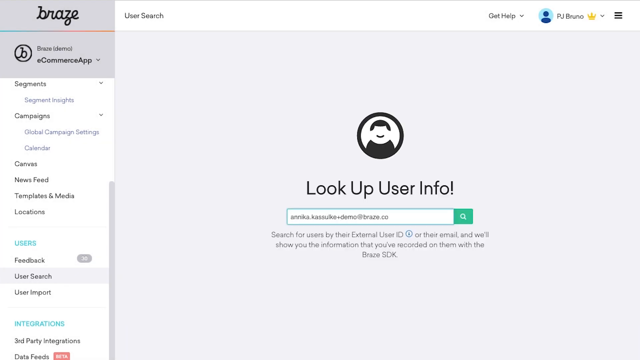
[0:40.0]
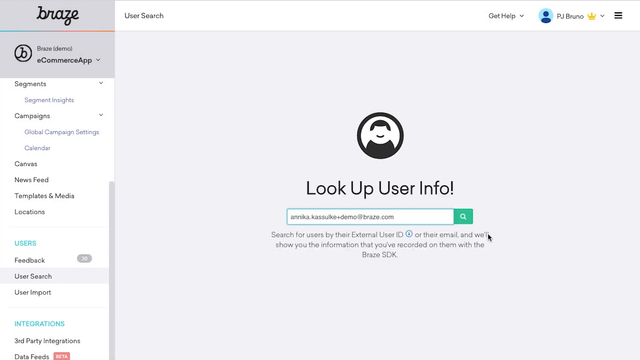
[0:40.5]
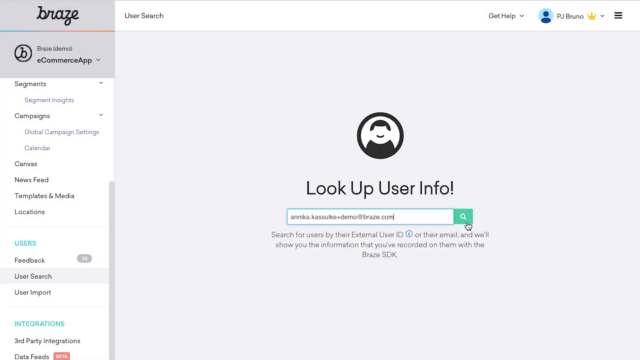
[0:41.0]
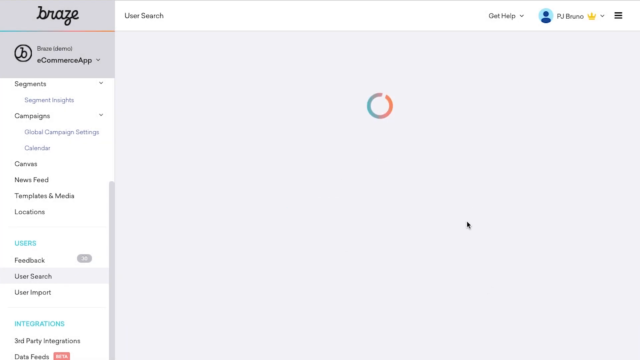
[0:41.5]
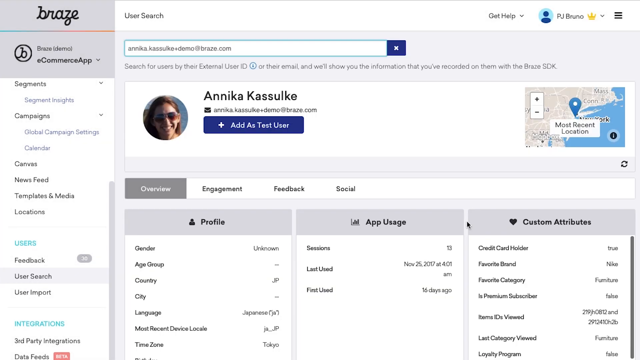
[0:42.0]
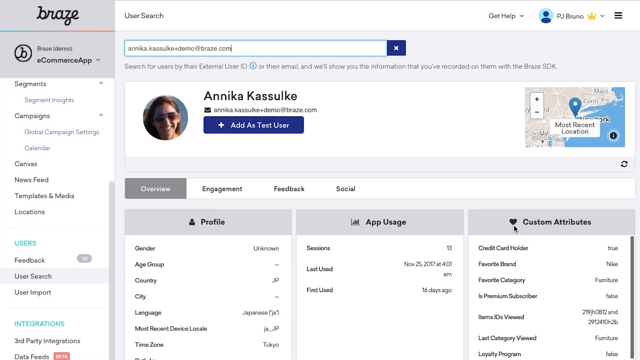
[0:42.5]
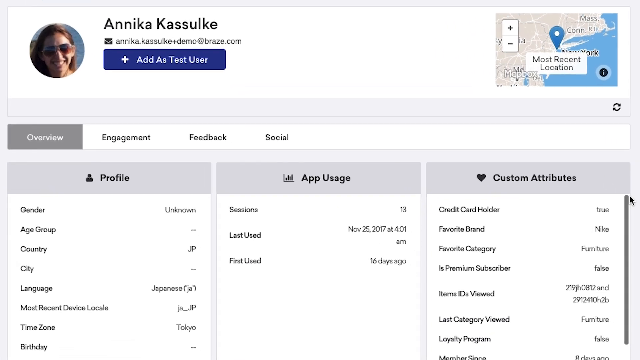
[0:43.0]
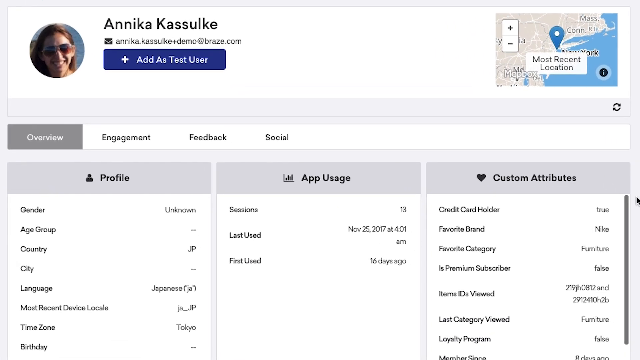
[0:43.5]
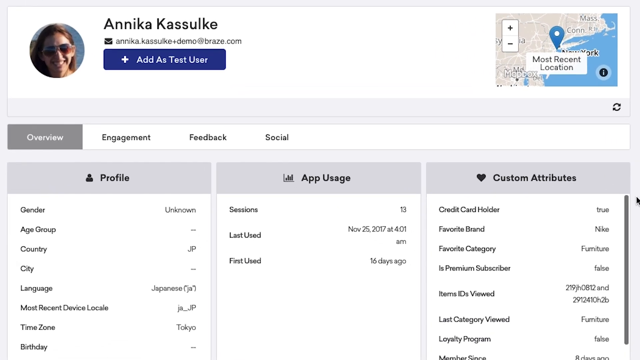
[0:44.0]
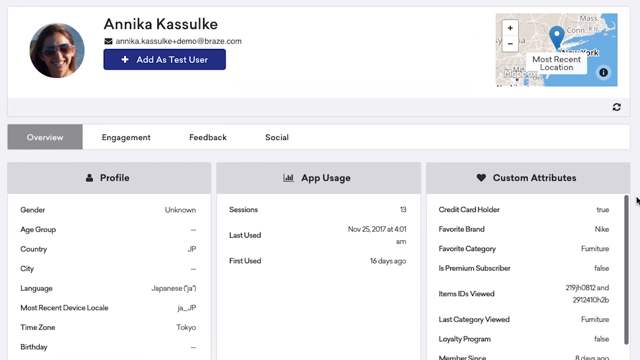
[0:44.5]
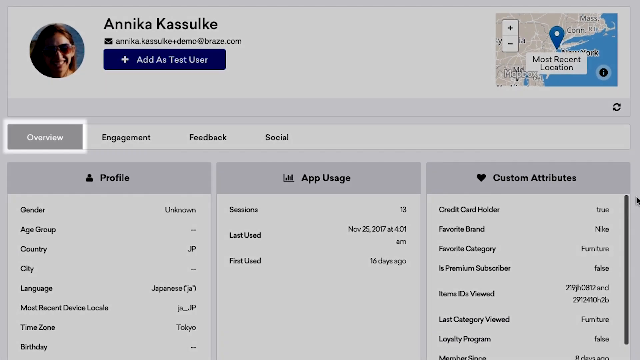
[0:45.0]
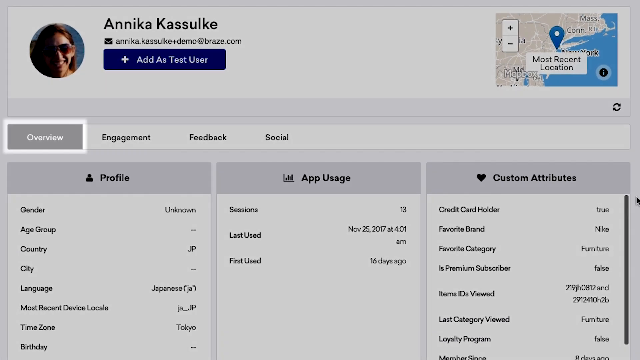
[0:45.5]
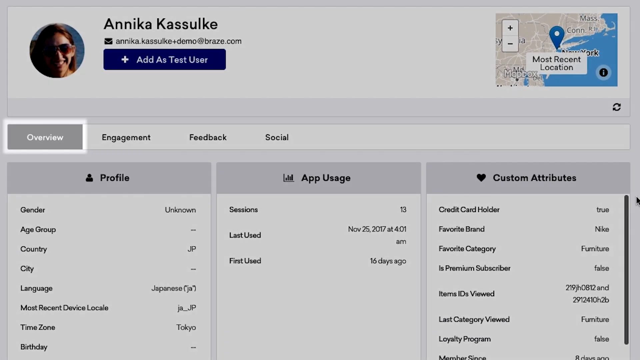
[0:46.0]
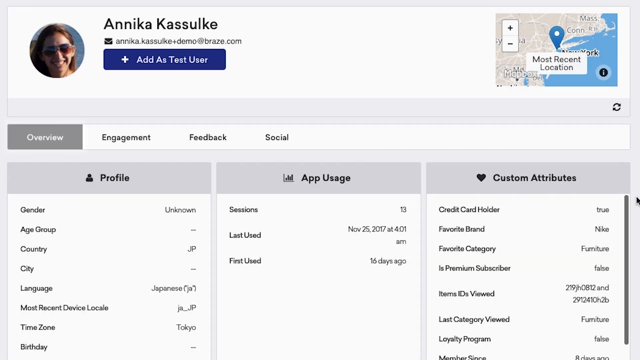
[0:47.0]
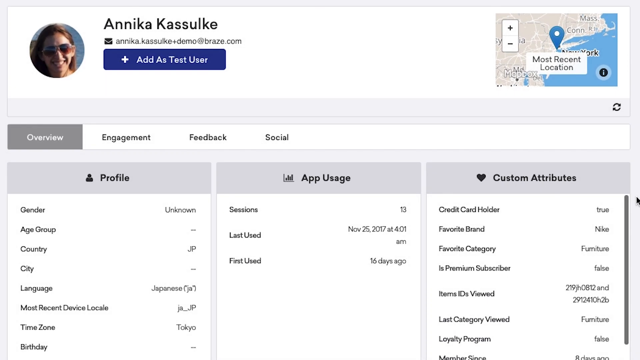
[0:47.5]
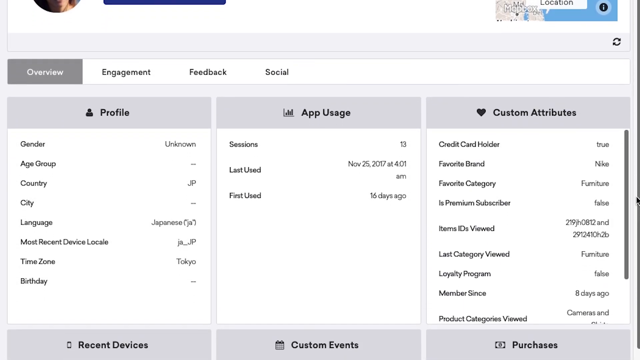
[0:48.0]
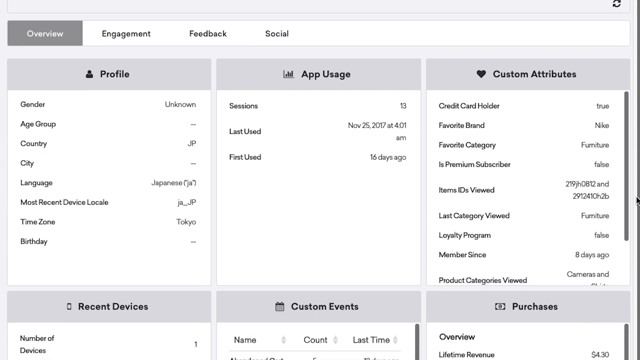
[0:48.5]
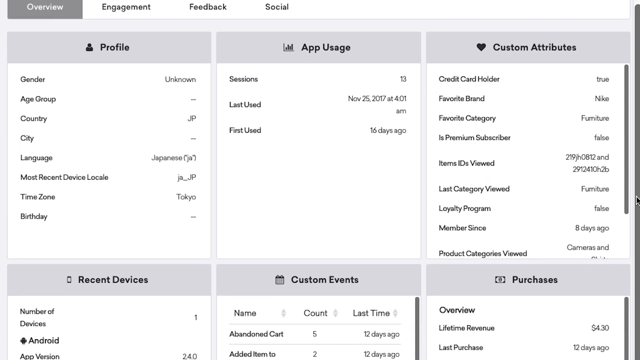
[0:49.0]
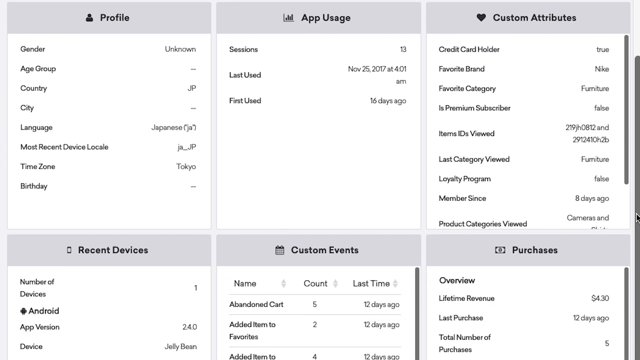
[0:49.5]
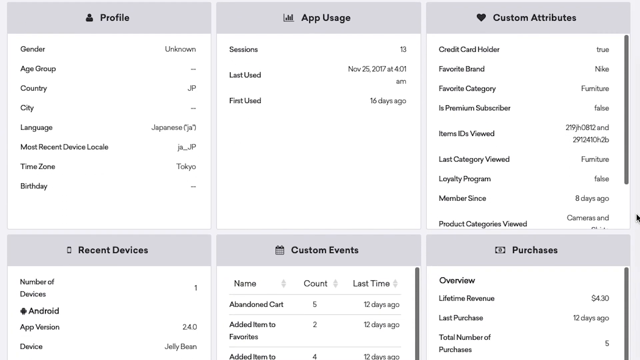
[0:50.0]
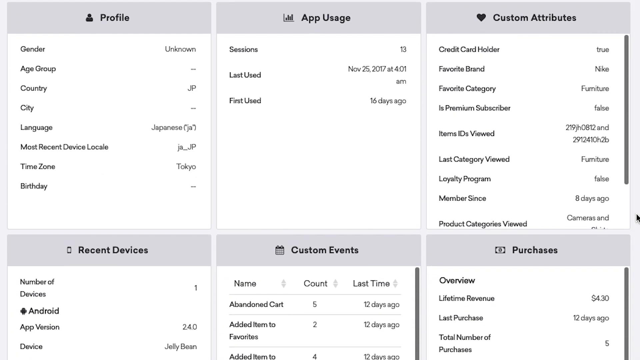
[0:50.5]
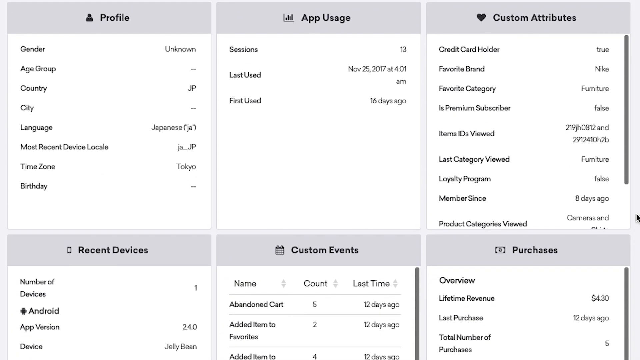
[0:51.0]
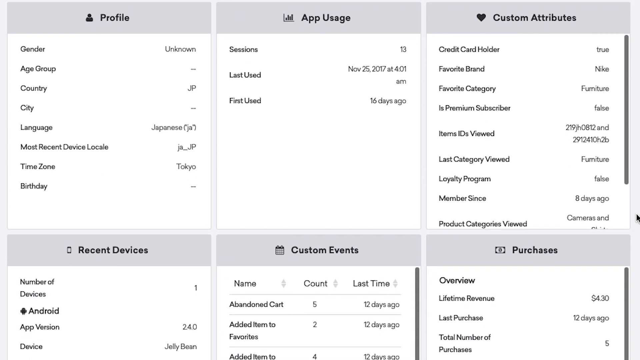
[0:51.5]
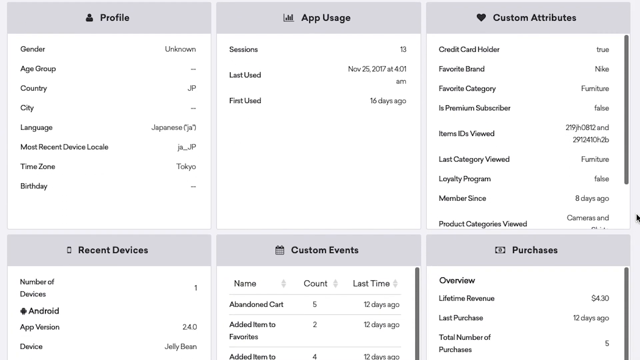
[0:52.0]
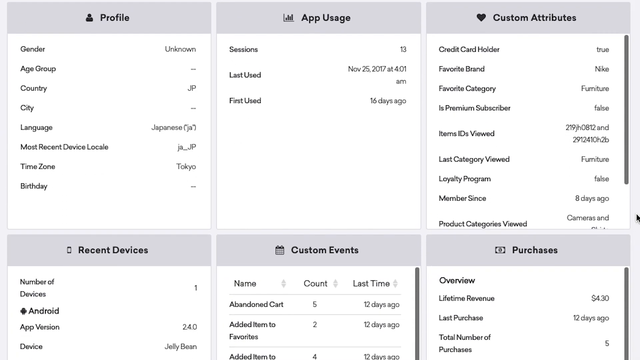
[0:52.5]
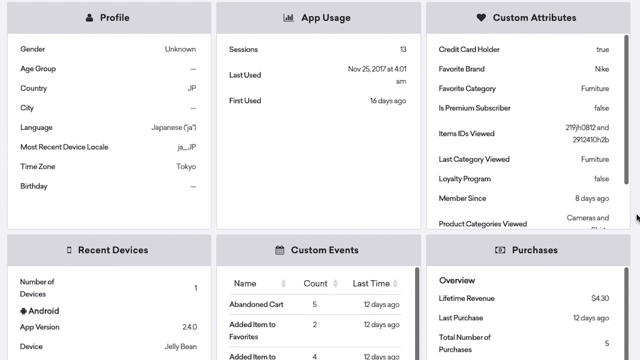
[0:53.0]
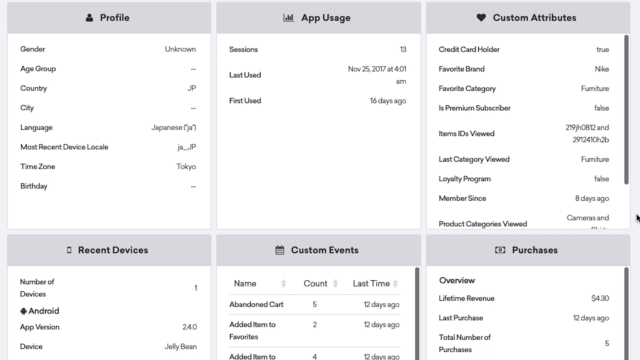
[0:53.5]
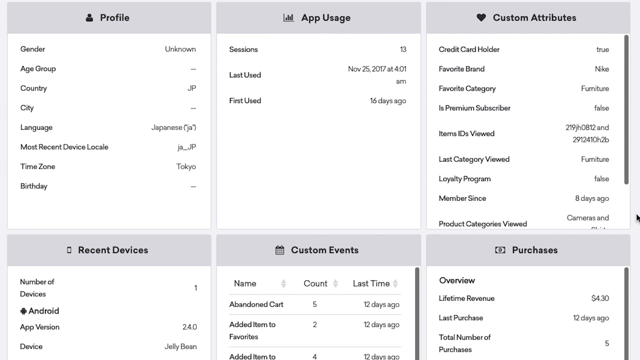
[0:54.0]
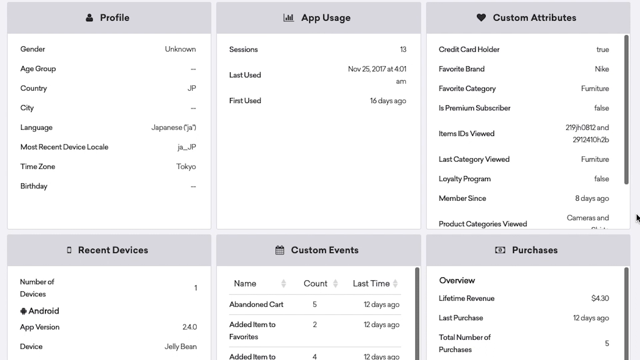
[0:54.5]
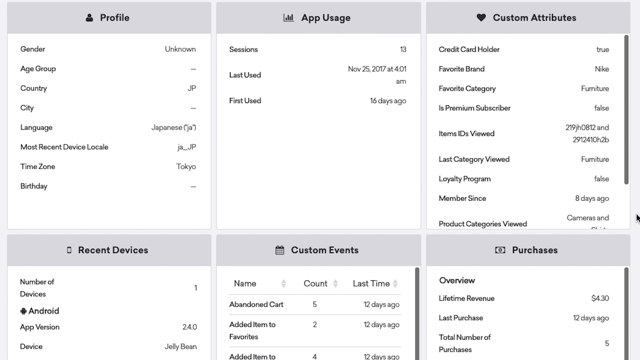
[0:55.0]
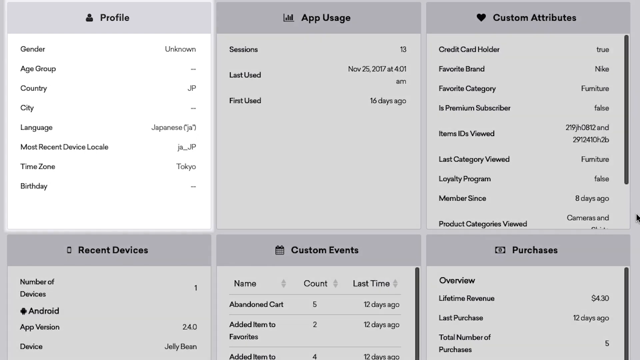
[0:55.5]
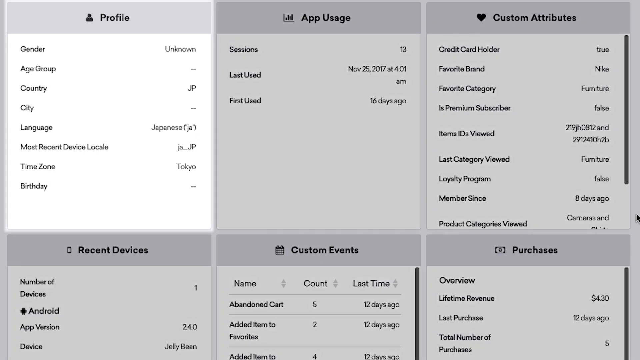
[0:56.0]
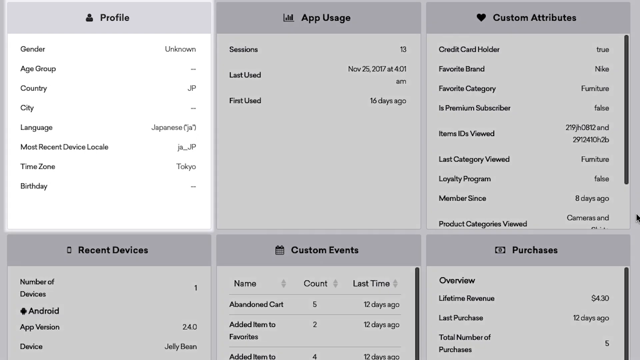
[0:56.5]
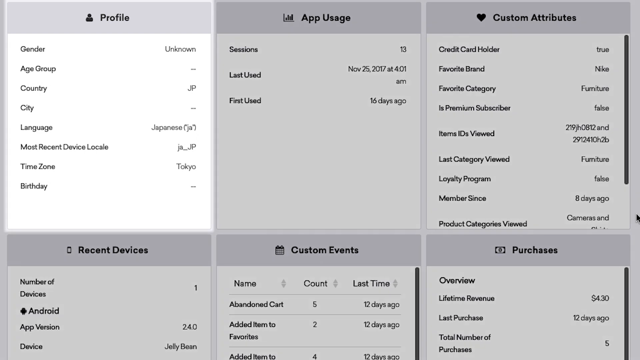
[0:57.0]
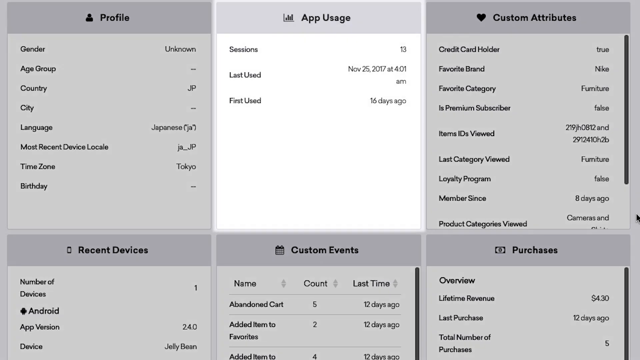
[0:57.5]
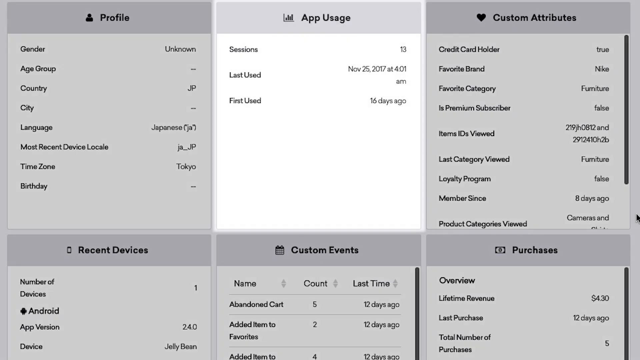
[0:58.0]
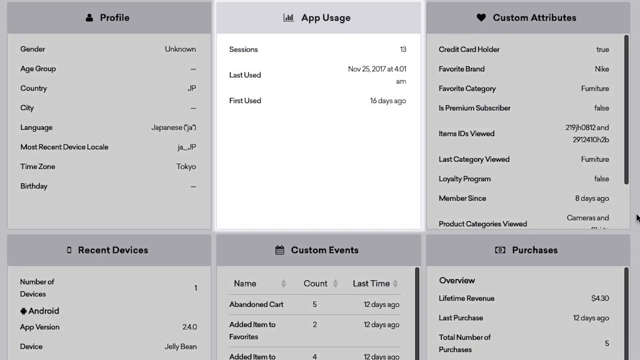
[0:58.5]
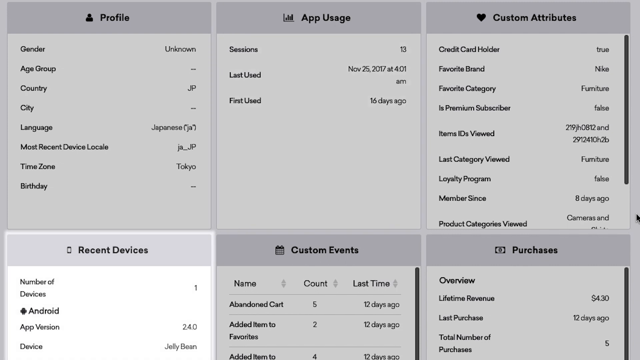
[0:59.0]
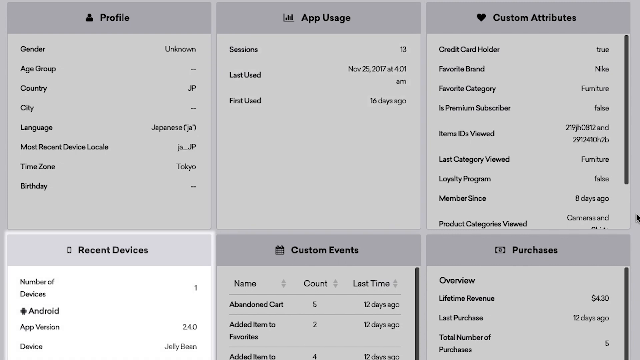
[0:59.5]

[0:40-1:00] What is perhaps a website or an app shows the word "Braze" in black cursive text in the upper left corner. Below it are the words "Braze" and then "e-commerce app." Beneath is a menu with pull-downs for "segments," "campaigns," "canvas," "newsfeed," "templates and media," "locations" and "users," and under users are items such as "feedback" and "user search." The user search button apparently has been pressed, as a page is open to the right reading "look up user info!" in the center with a round black-and-white profile icon. Beneath it is an open search box in which "Anika" has been typed, with a magnifying glass button. The search opens Anika's profile with her current information, and the page starts scrolling down. From left to right it shows her profile information, app usage and custom attributes, such as credit card holder. Below that, her favorite brand is Nike, her favorite category is furniture, and the last category she viewed is furniture. A loyalty program entry reads false, and her member-since time is just eight days ago.